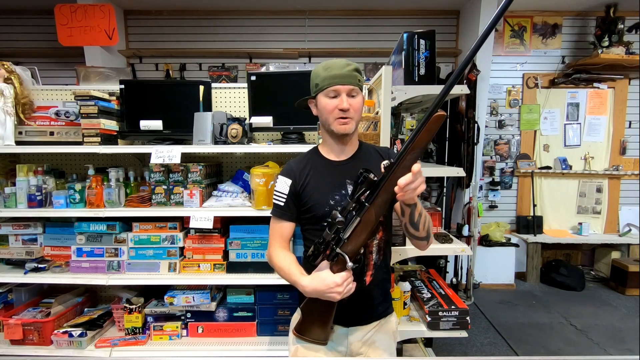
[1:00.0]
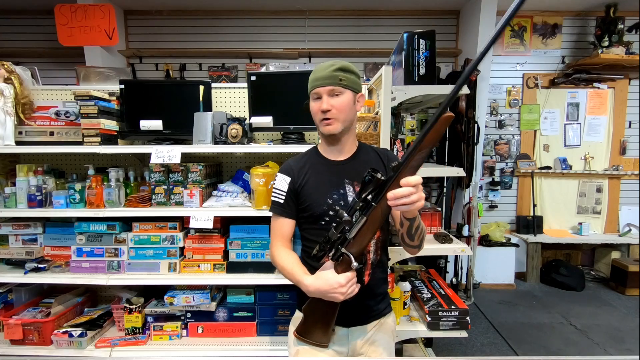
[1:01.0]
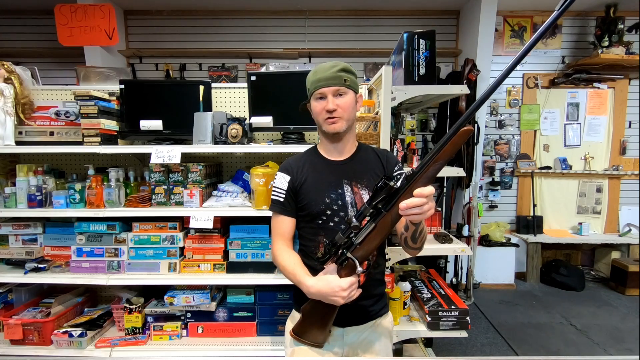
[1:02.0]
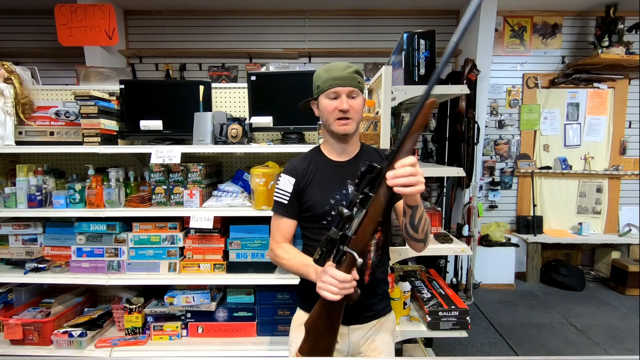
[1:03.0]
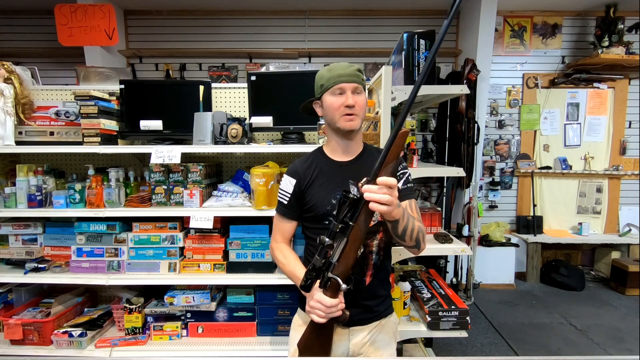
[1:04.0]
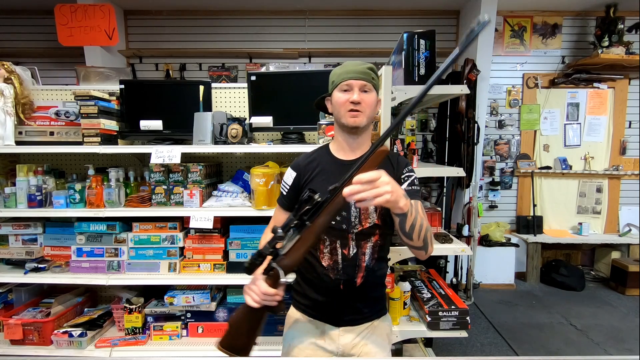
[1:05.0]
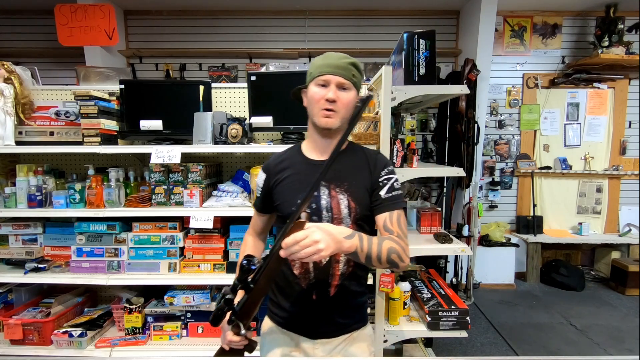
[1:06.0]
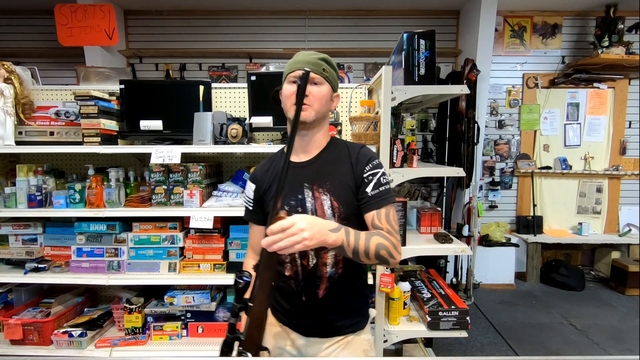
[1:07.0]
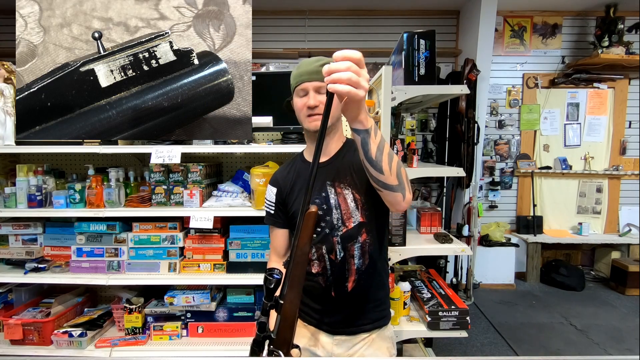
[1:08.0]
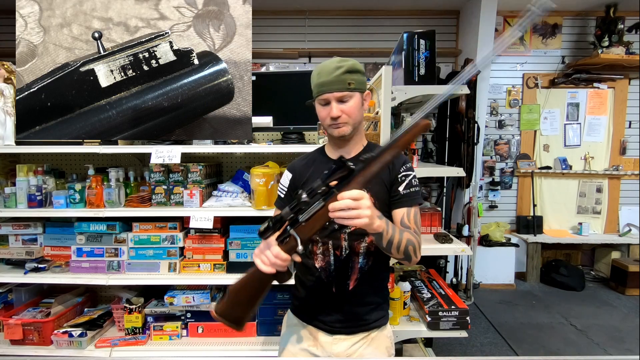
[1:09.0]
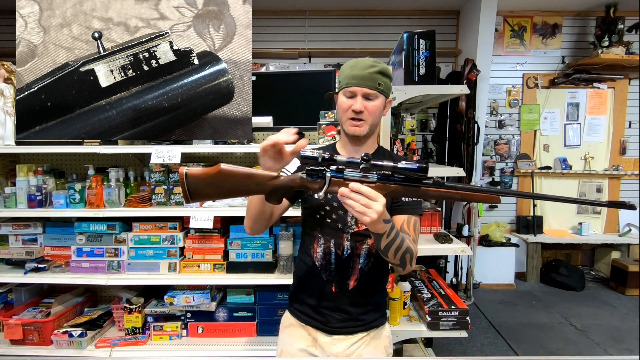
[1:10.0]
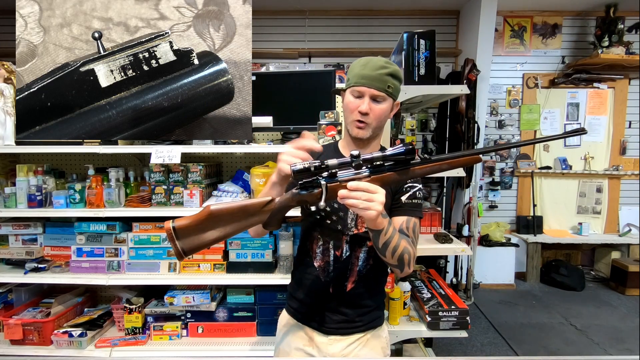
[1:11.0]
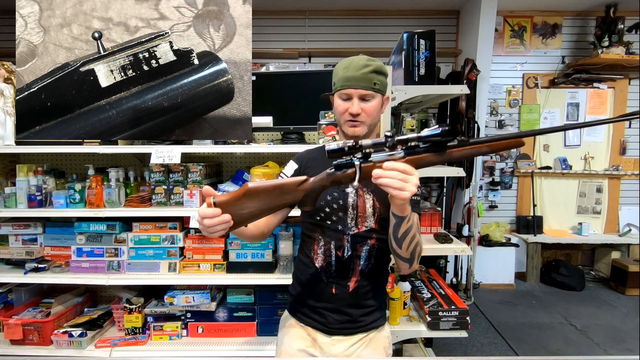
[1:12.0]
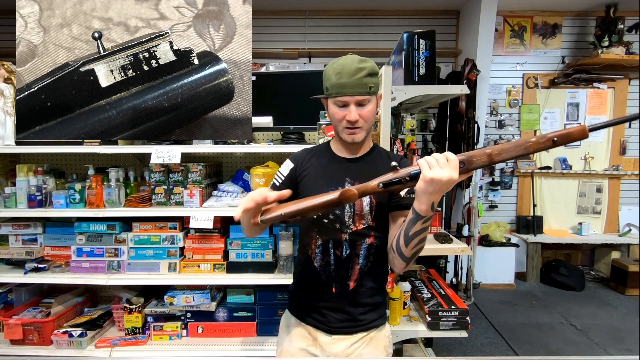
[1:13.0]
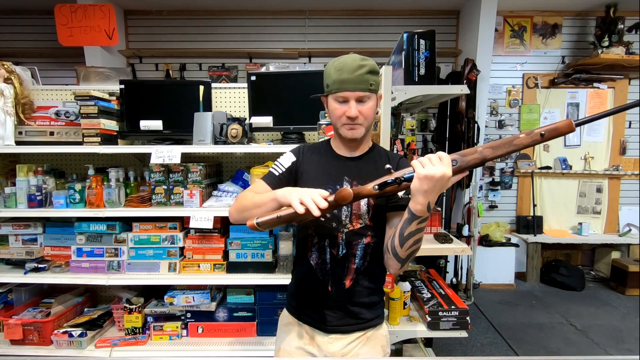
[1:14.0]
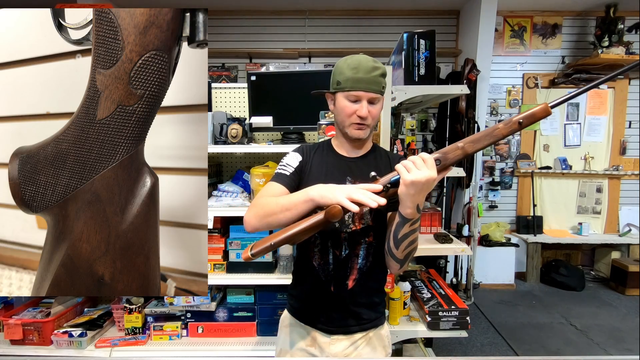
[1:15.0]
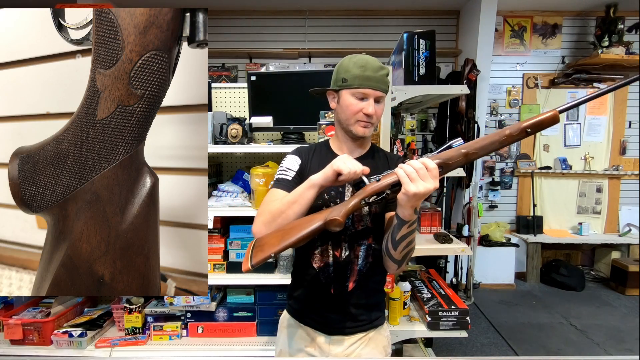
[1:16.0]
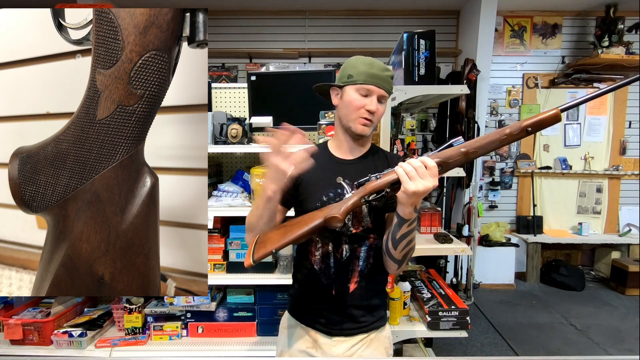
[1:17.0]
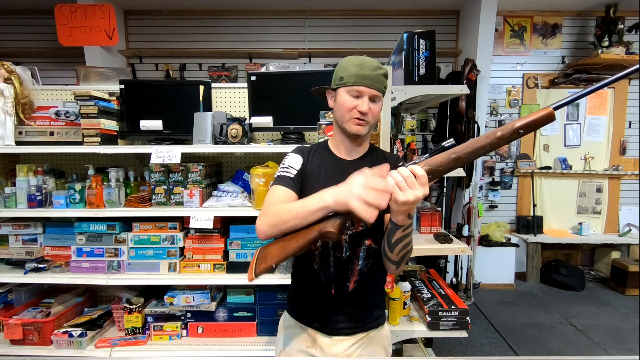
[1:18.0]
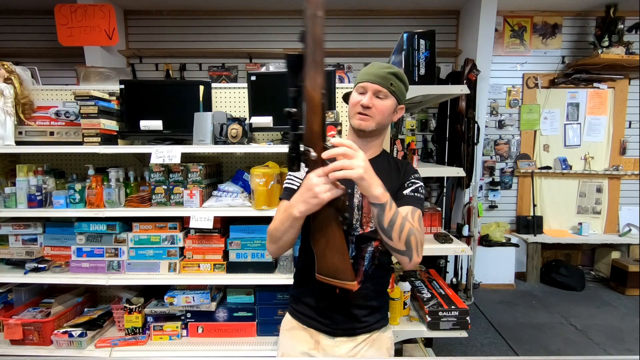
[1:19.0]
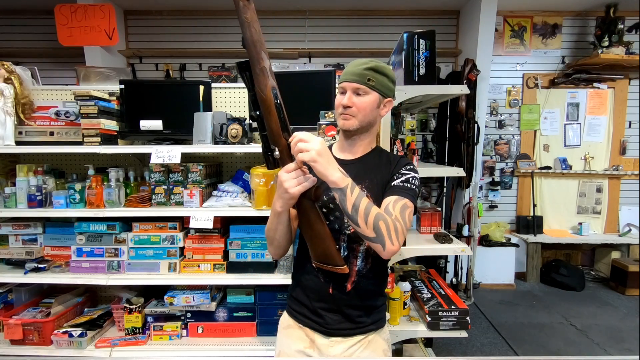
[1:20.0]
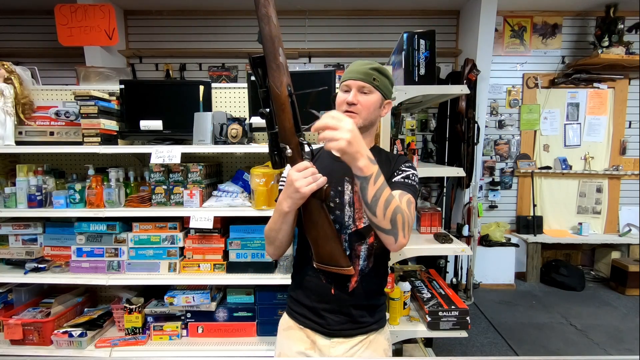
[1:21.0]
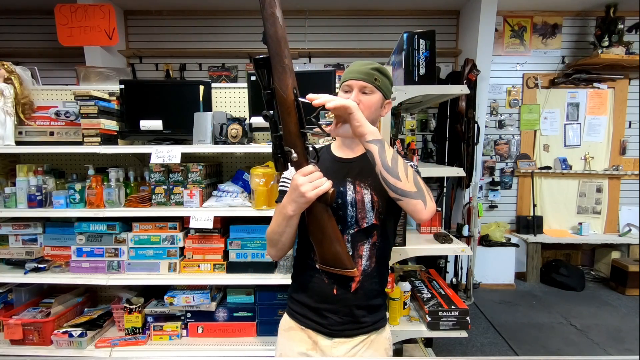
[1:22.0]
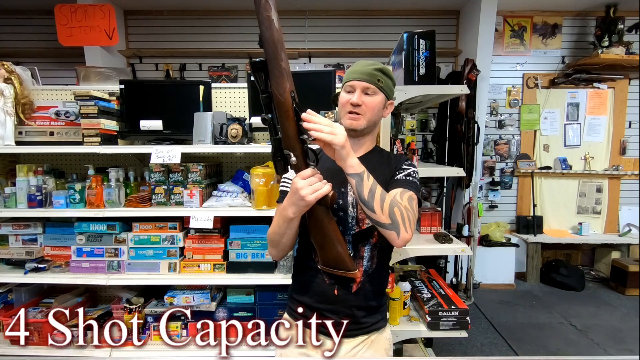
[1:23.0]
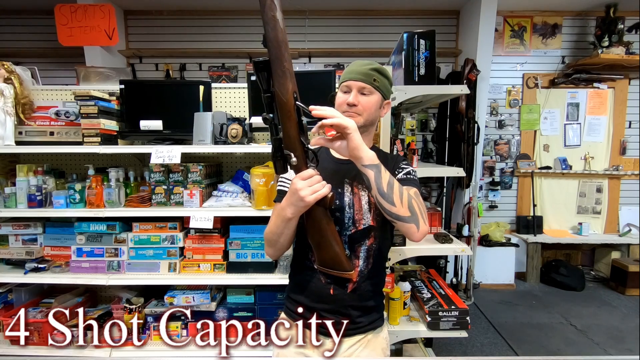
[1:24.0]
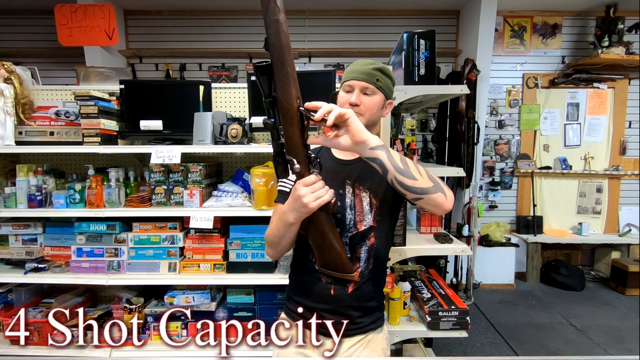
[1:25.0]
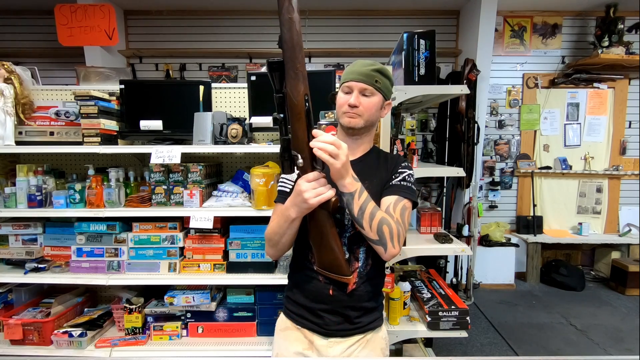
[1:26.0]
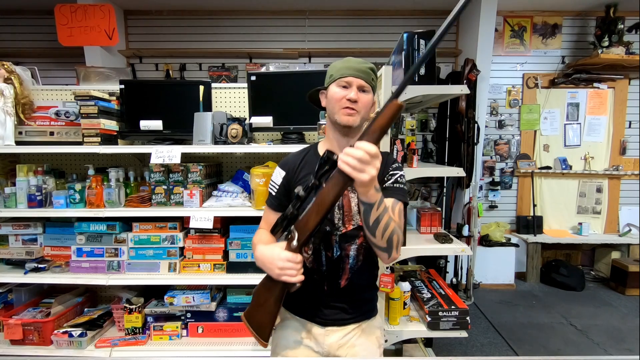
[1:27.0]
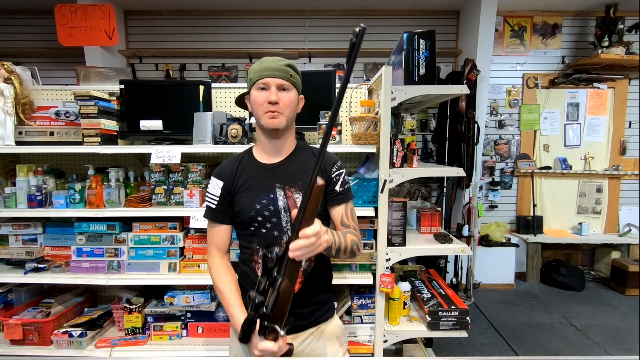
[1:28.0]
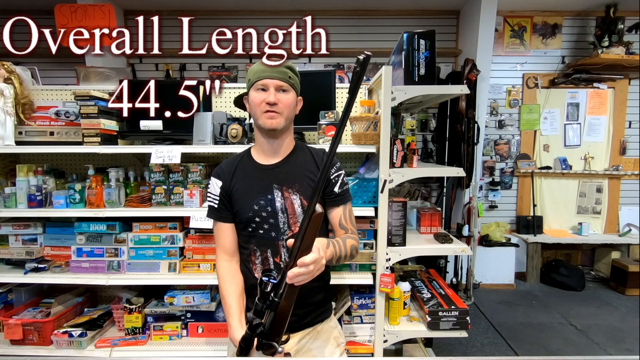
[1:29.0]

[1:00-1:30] A man stands behind the counter of a store, holding an antique or vintage rifle pointed towards the ceiling, with his left hand about halfway down the rifle and his right hand at the base. He appears to be in an antique shop. Behind him are shelves with different items: one shelf has a collection of jigsaw puzzles, the shelf above it contains soap and other cleaning items, and the shelf above that has a vintage cassette player alongside two small television or monitor screens. The man talks to the camera as he holds the rifle. He holds it further upright, looks to the end of it and shows the very tip of it to the viewer. He then holds it more horizontally and shows how the wood has been moulded on the rifle. He brings it down, and the overall length is shown as 44.5 inches.